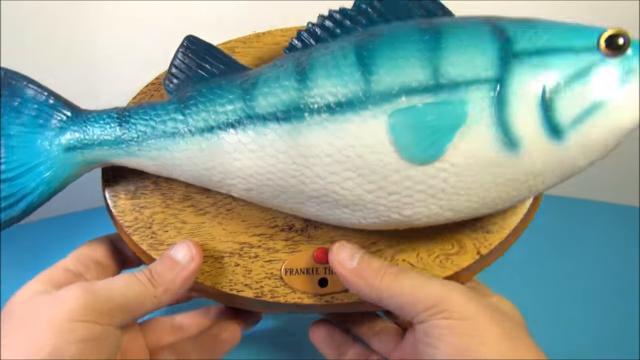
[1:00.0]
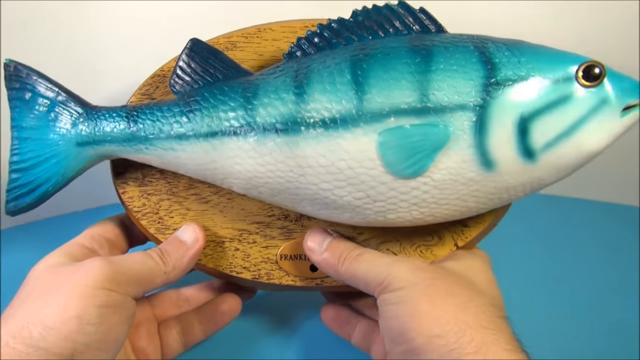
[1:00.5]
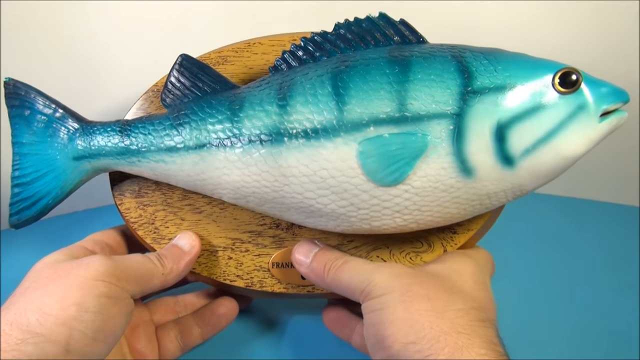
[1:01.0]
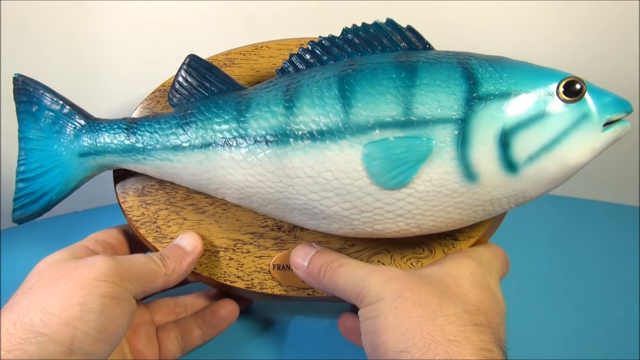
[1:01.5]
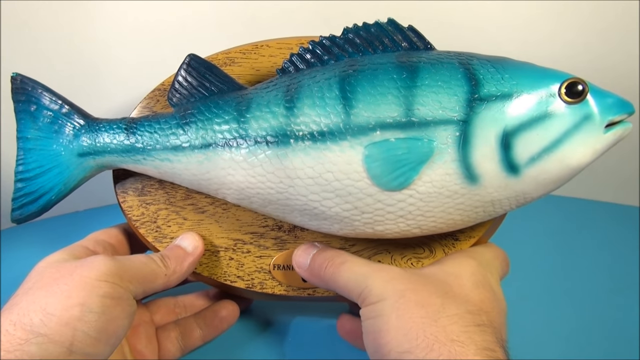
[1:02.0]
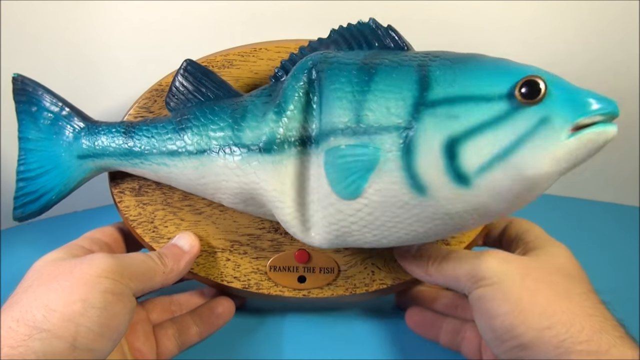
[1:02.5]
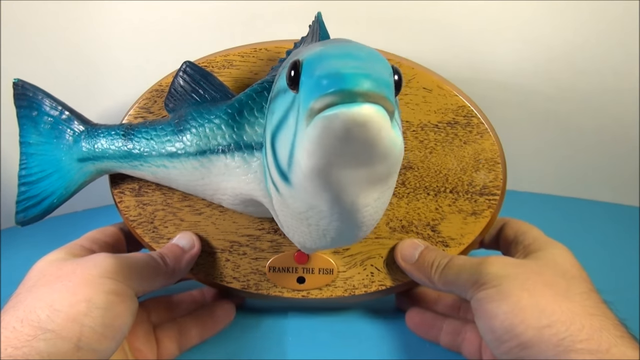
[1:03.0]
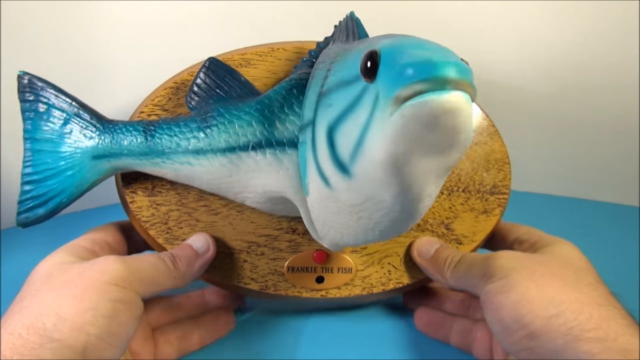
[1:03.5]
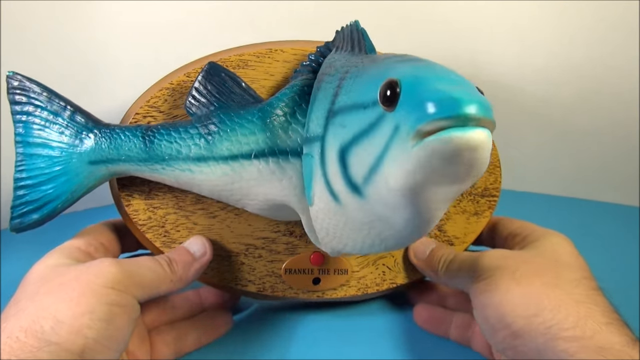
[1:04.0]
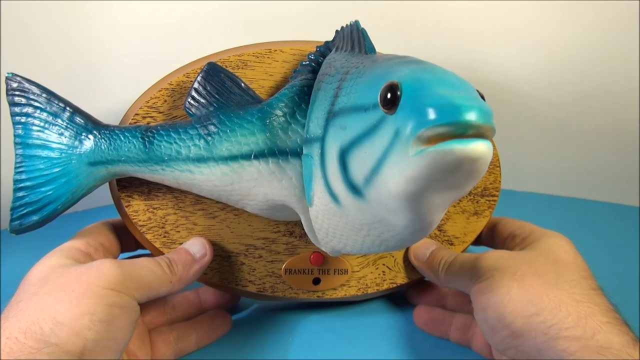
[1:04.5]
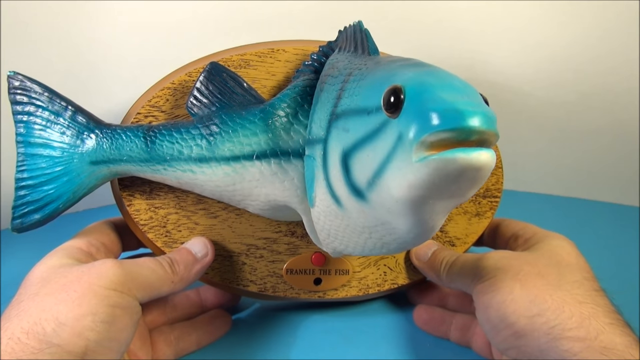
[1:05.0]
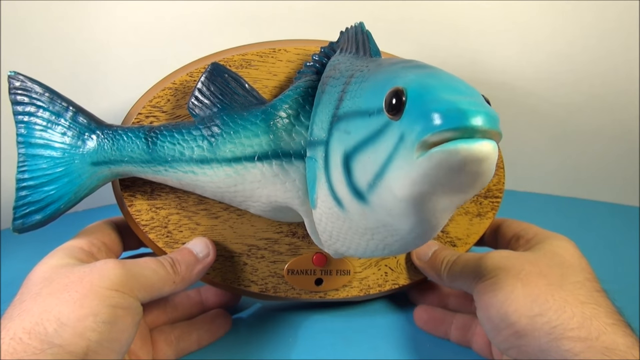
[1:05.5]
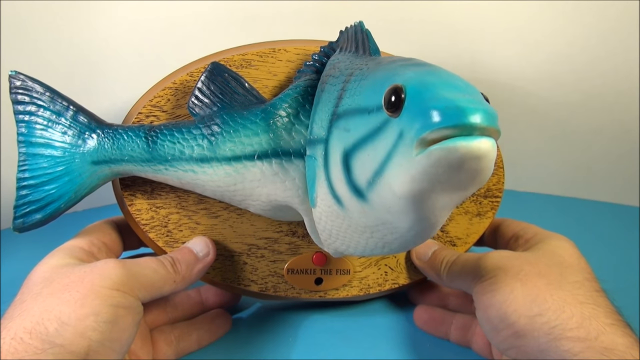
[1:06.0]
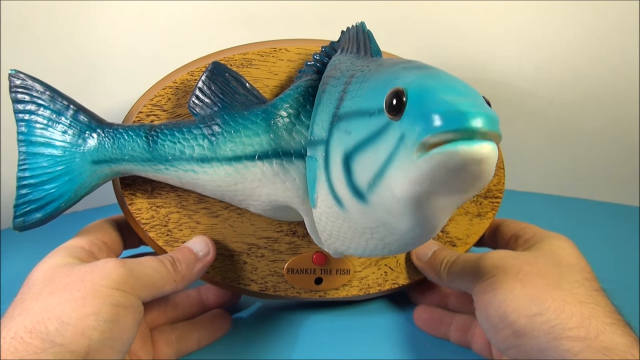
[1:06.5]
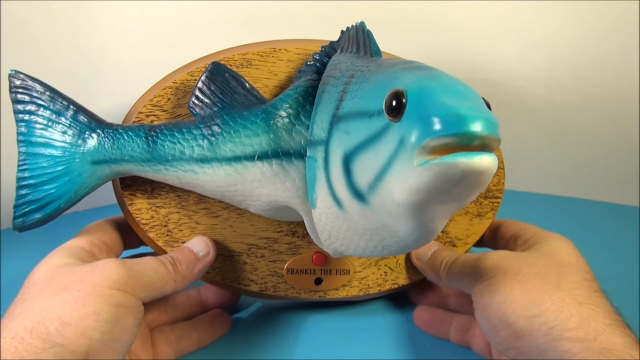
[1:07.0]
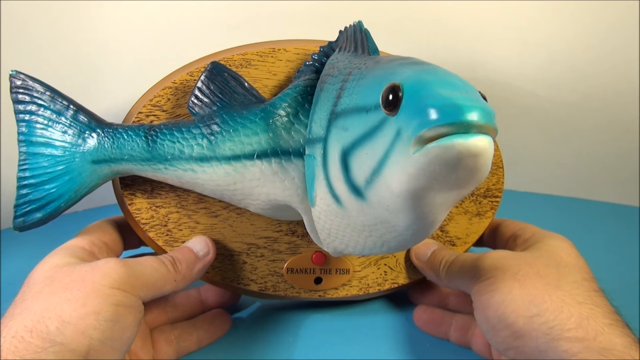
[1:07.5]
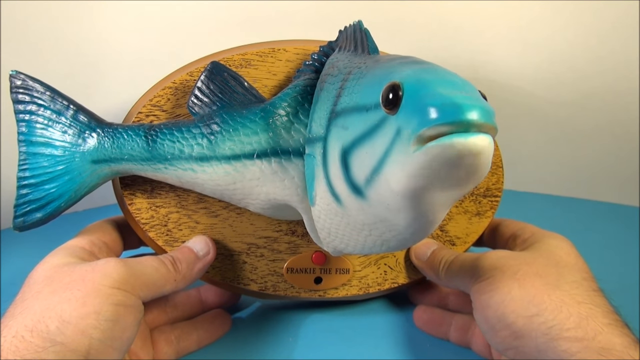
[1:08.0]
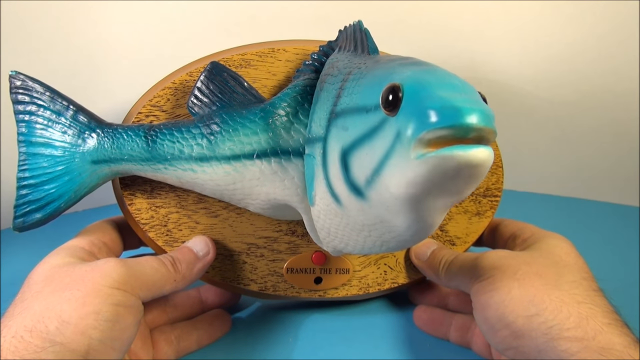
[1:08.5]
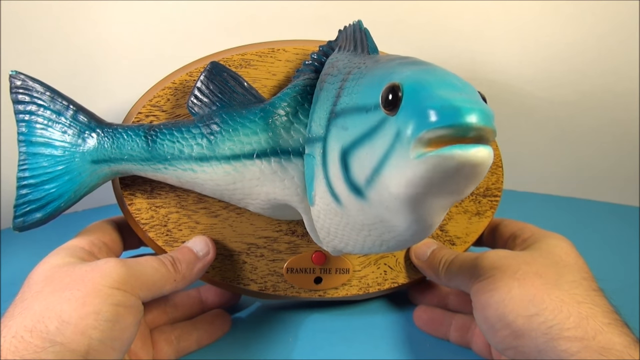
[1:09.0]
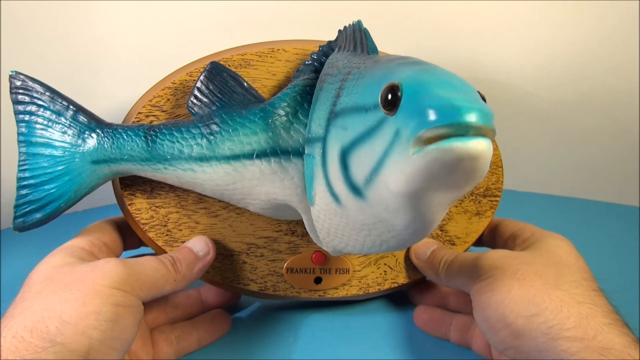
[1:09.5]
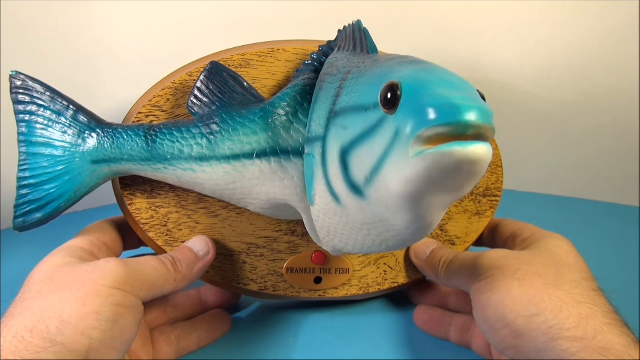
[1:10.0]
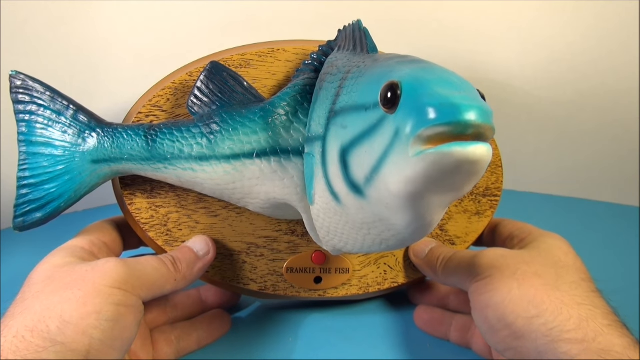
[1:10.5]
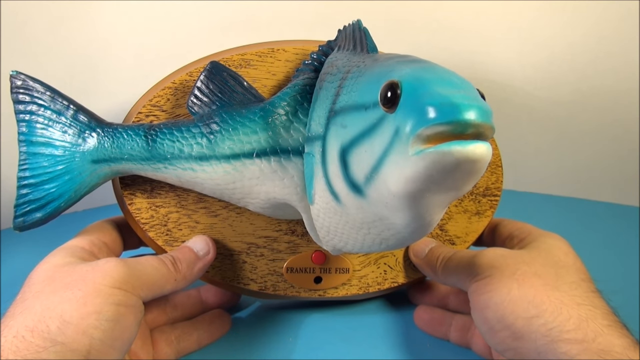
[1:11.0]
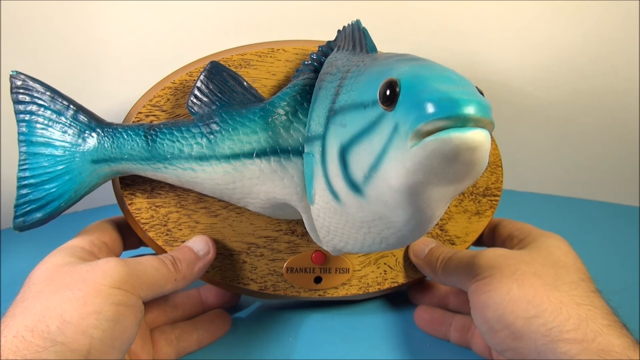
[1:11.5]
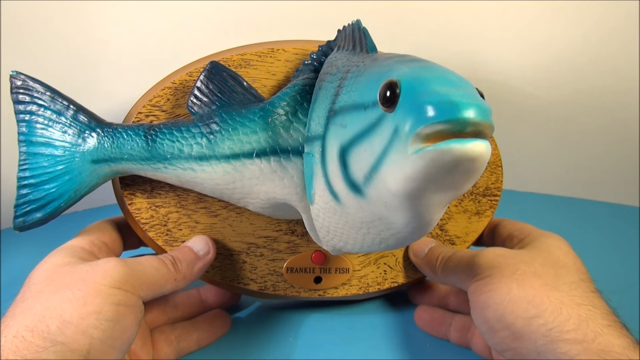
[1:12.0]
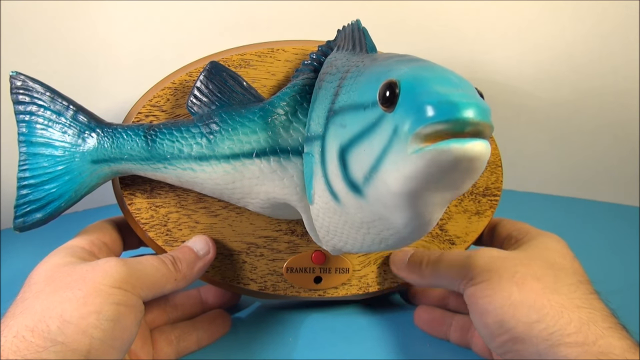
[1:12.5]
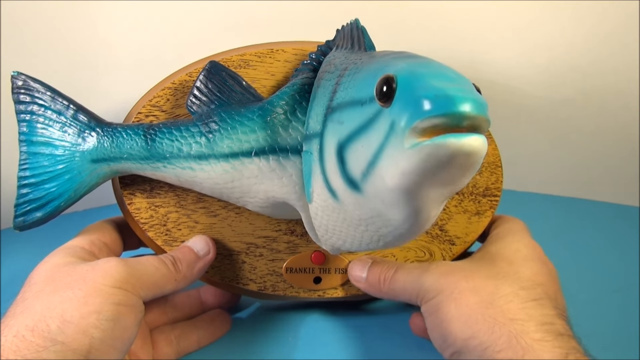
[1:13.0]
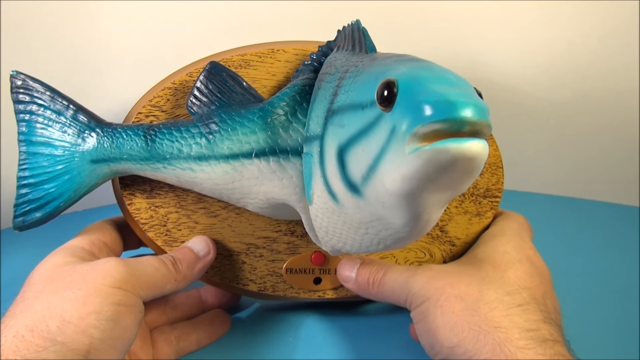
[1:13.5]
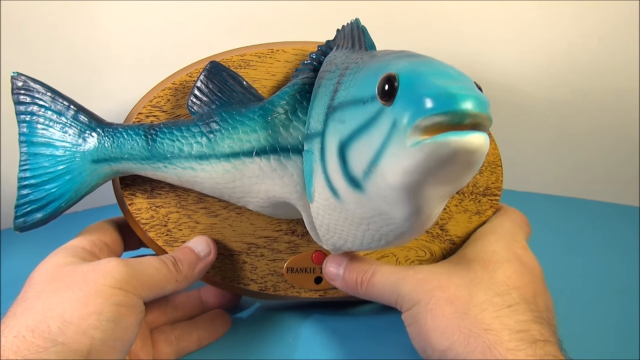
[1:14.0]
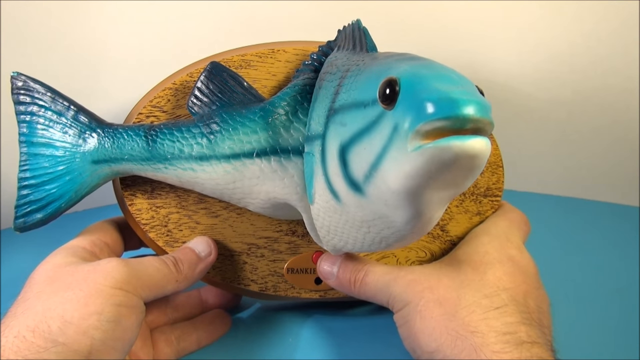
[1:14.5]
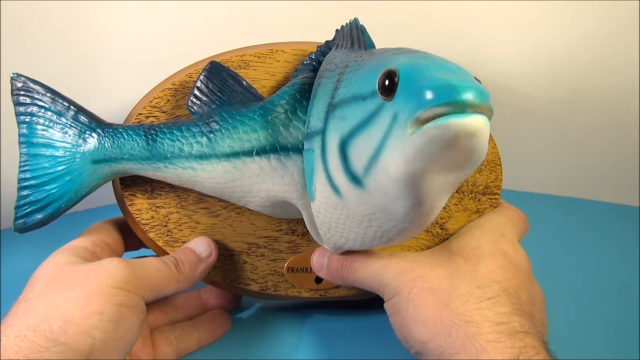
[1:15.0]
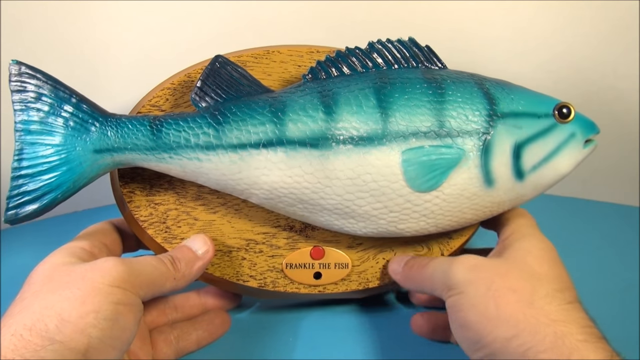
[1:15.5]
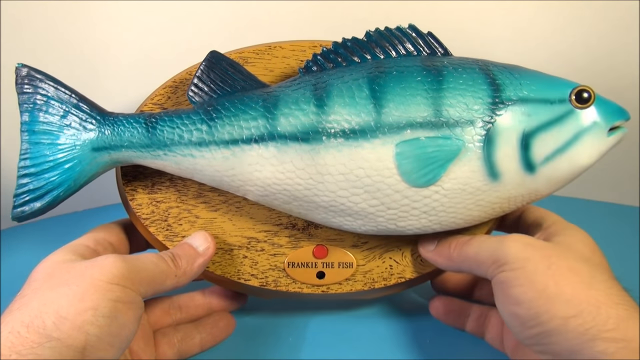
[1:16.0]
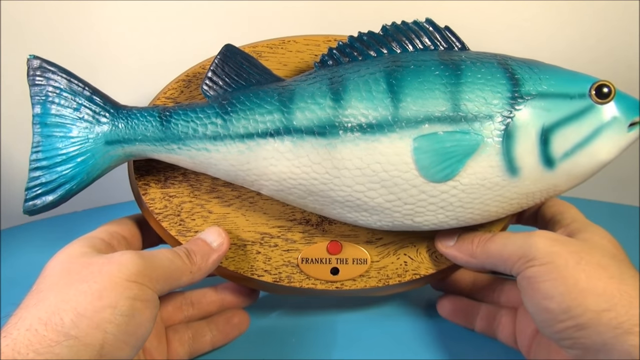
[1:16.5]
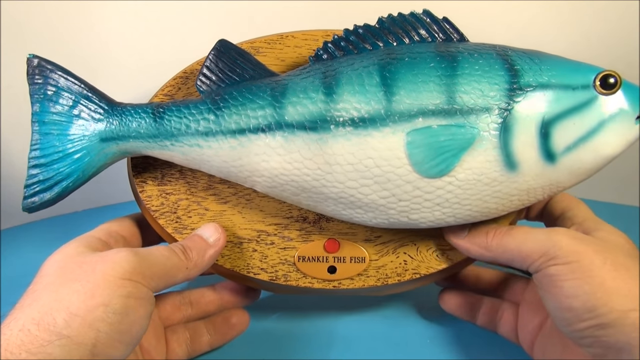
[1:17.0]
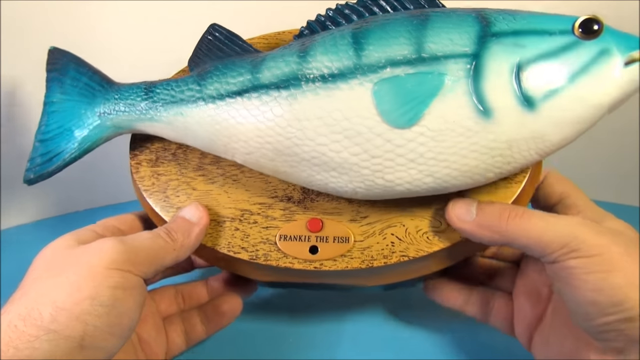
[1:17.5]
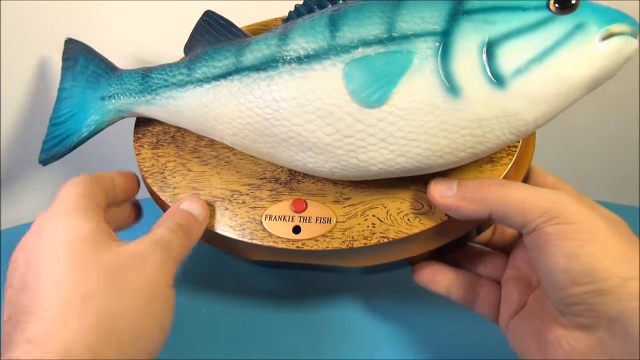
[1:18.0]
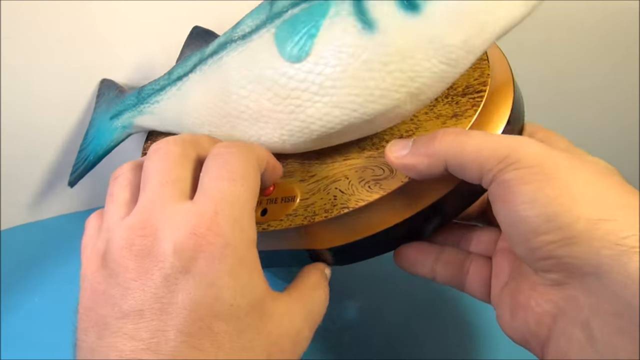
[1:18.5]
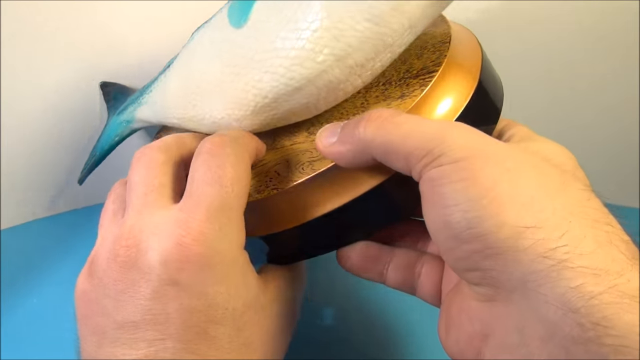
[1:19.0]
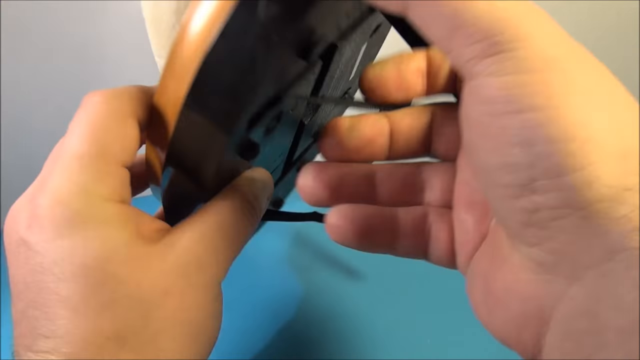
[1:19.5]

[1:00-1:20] The person presses the red button on the front of the plate. The front half of the fish turns 90 degrees, bending at a right angle with its head facing the person, and the fish's mouth opens and closes as it sings. Both eyes are now visible, one on each side of the head. When the fish is done singing, it turns its head back flat against the mounting plate. The person holds the mounting plate in both hands, and after the singing ends turns the fish and plate over to show the back side, which is all black.